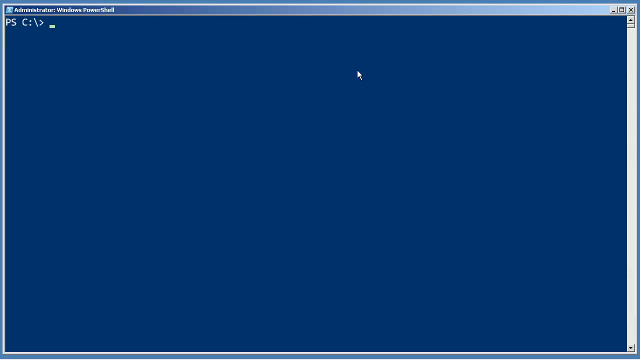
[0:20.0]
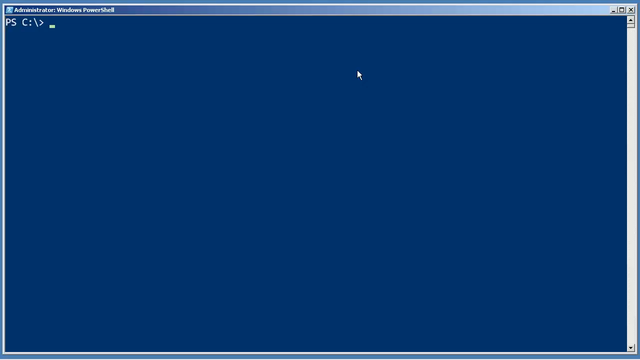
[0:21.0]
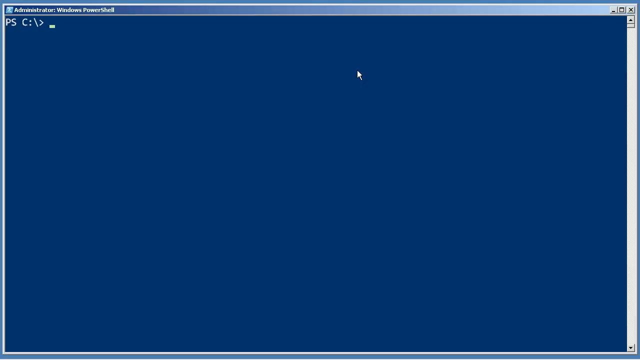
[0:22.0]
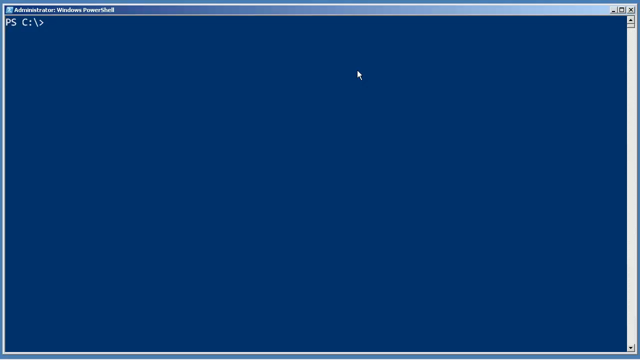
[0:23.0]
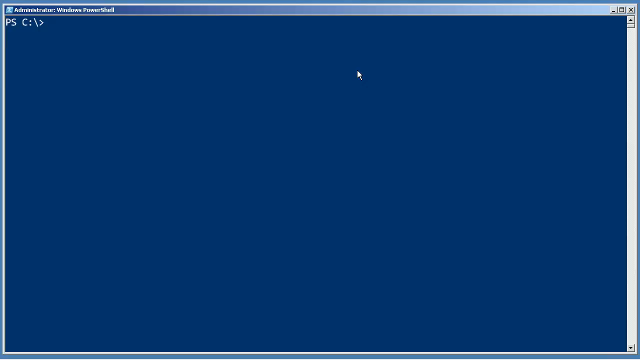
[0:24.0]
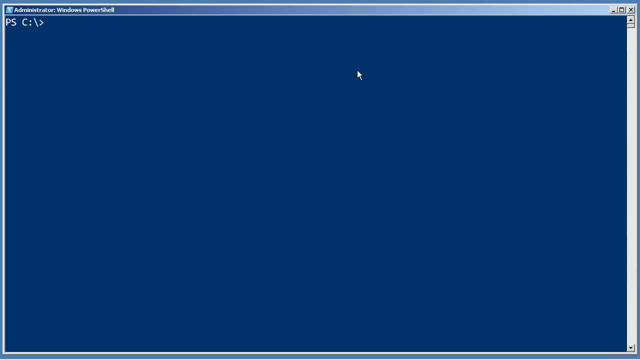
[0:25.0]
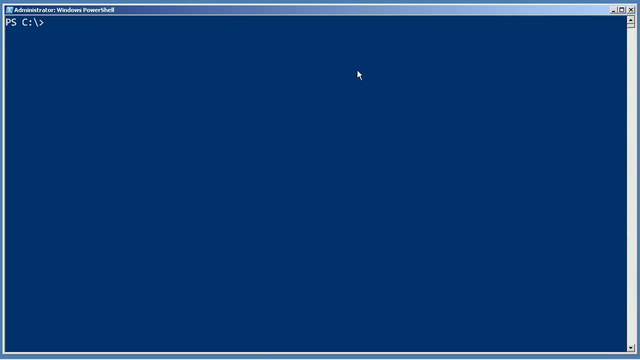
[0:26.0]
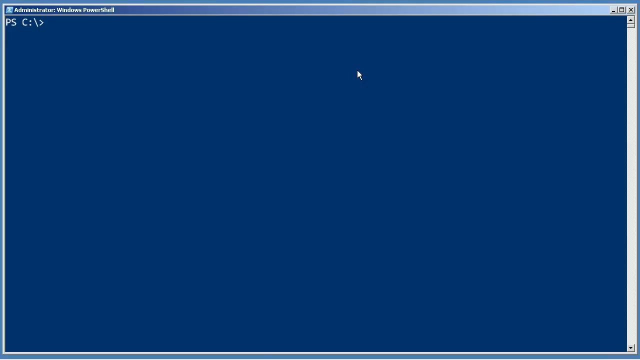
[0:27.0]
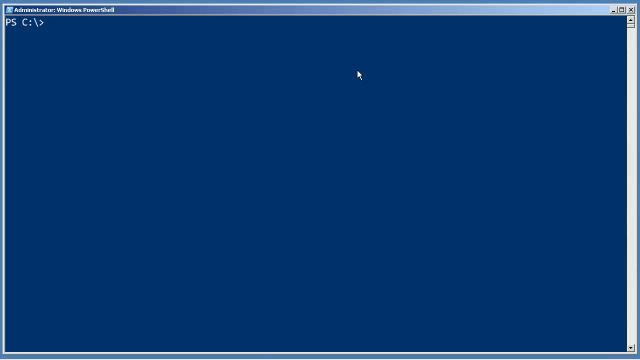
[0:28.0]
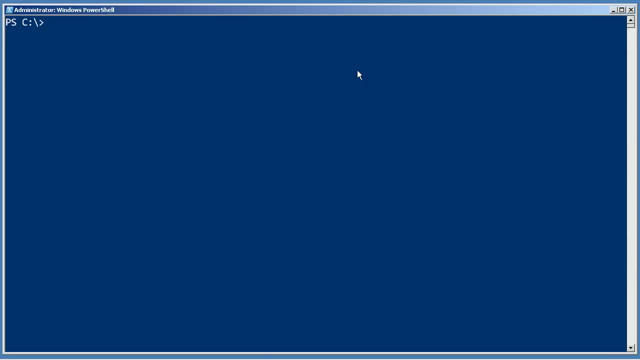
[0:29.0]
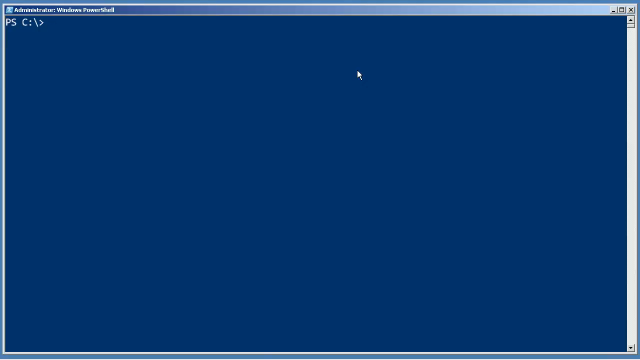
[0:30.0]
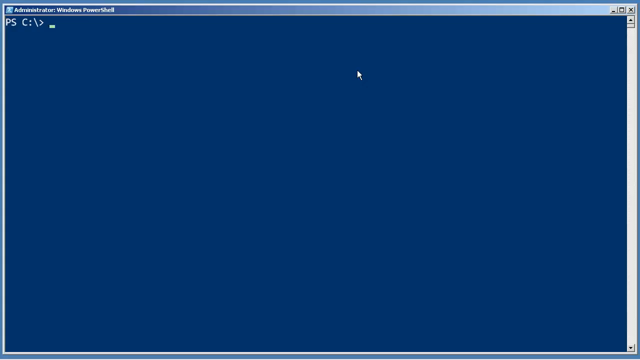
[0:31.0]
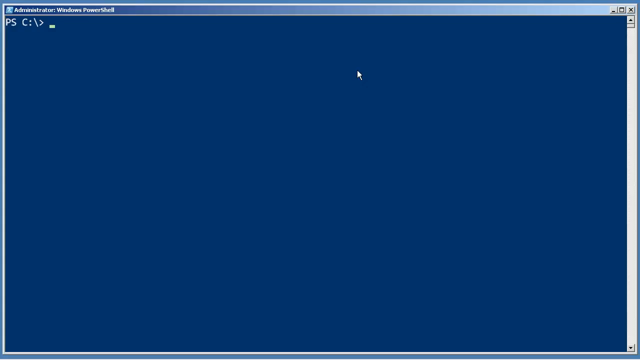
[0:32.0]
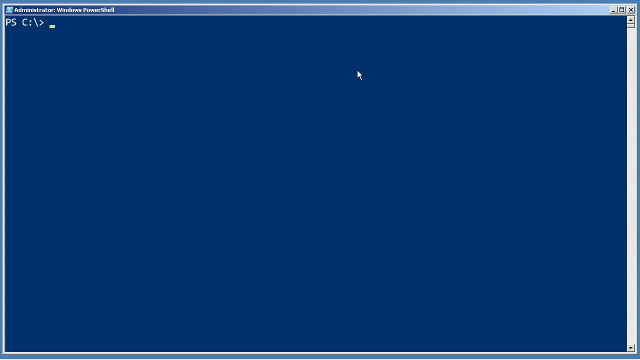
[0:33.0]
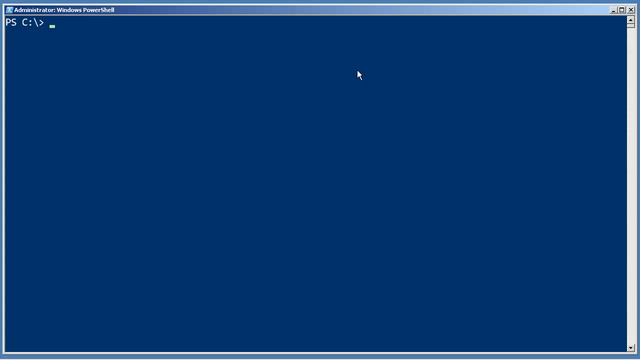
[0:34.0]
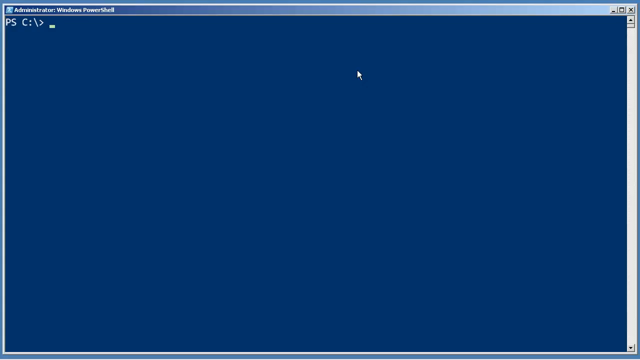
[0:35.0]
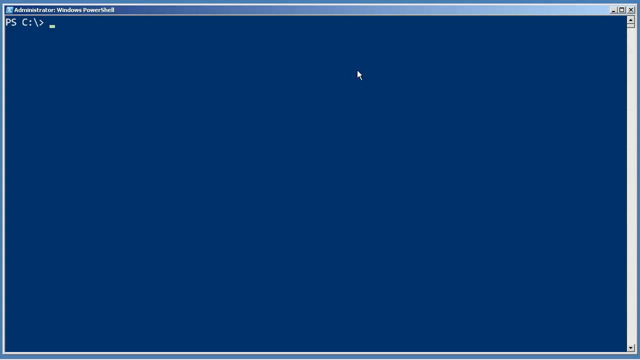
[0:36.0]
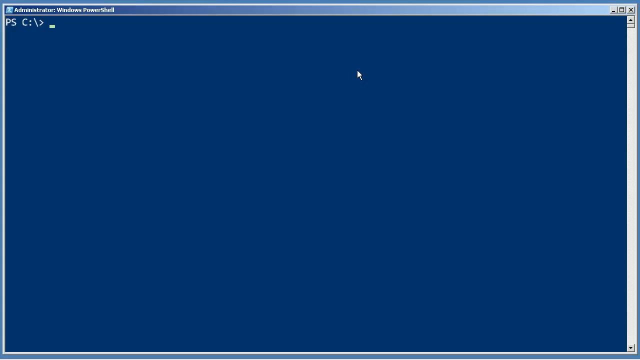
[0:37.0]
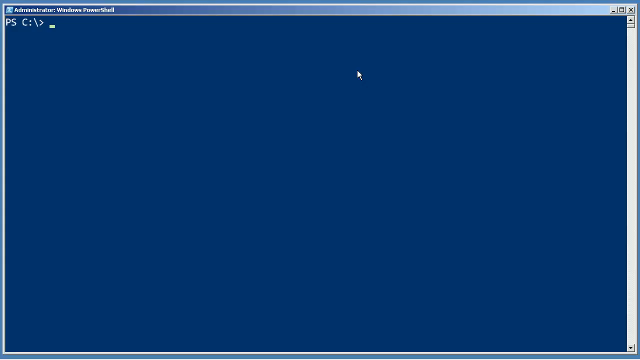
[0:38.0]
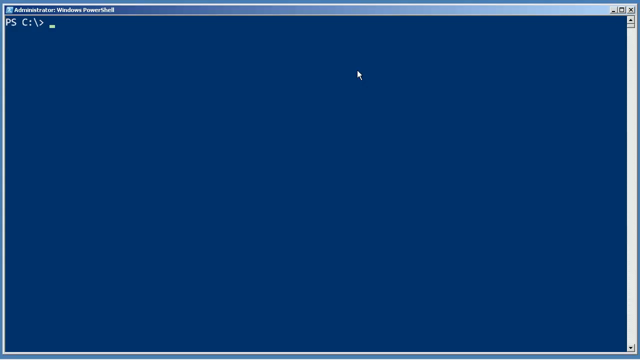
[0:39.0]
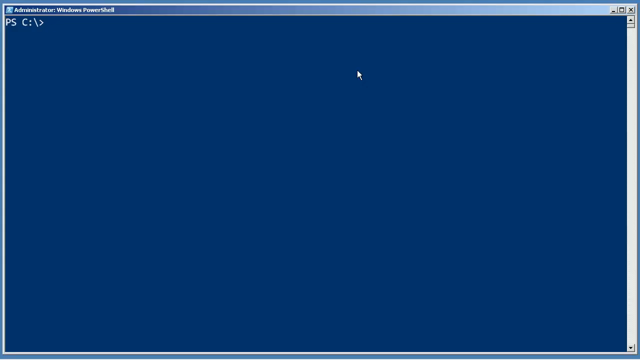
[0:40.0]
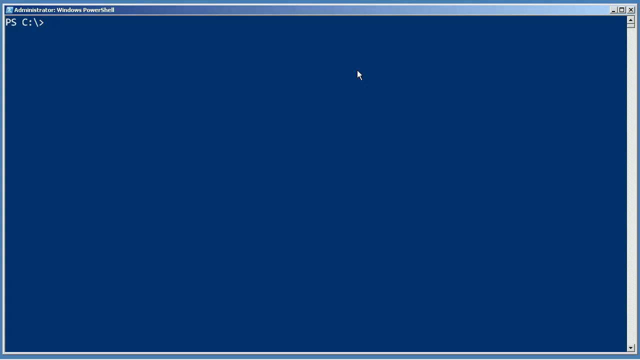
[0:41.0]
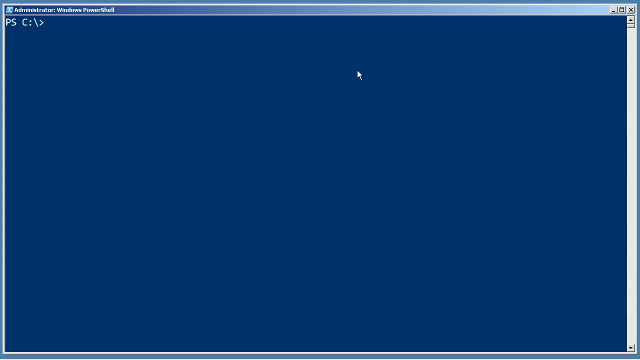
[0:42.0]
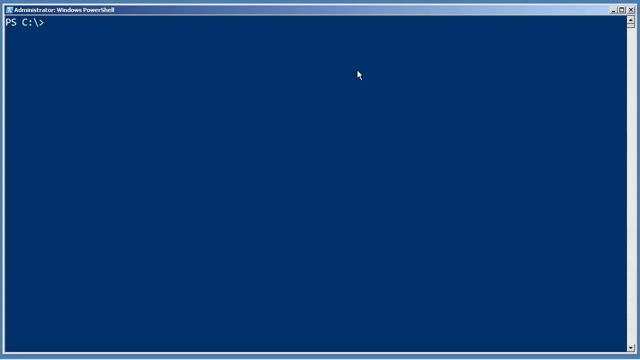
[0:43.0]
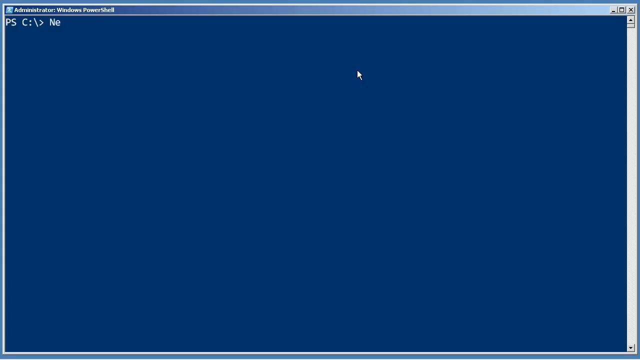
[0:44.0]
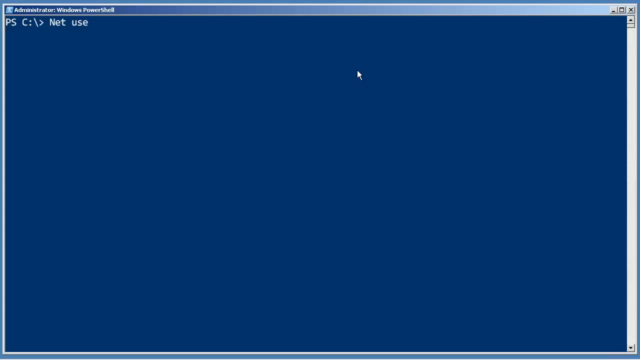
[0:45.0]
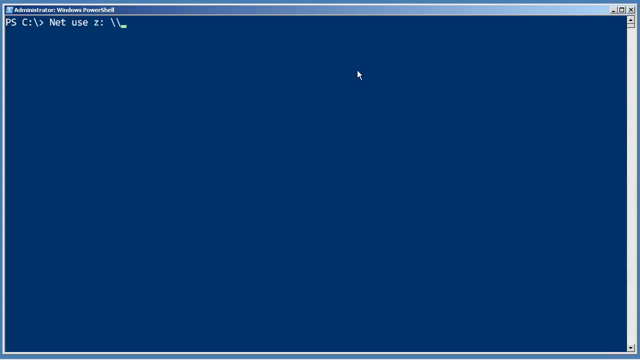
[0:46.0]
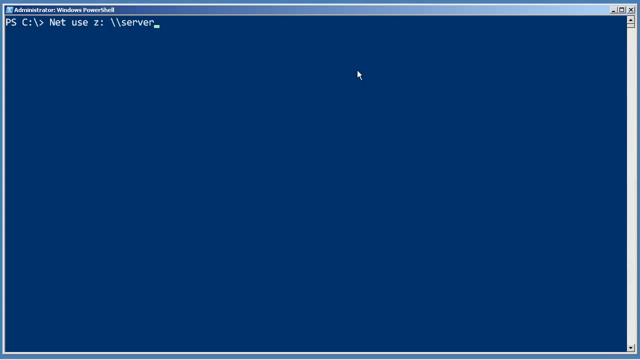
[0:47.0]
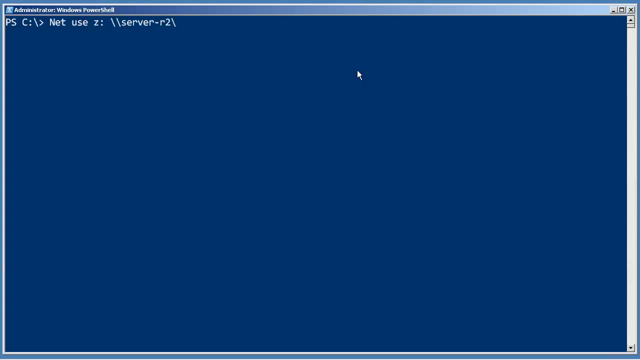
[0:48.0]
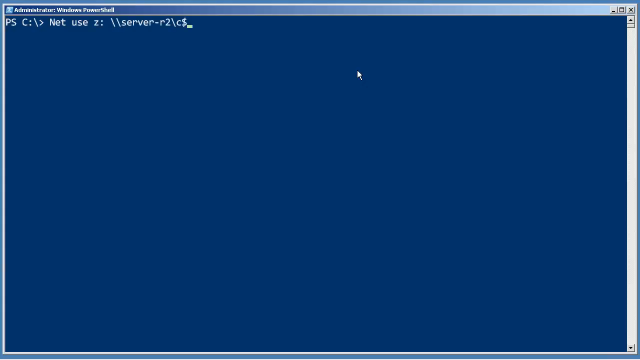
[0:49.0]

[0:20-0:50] The text on the screen reads "PS C:\>". The cursor blinks until the user types in "Net use z: \\server-r2\c$" letter by letter. The background is dark blue, and this seems to be the Windows PowerShell application. The screen recording takes up the entire frame; most of the screen is blank blue background, with the only text in the top left-hand corner, appearing from left to right.